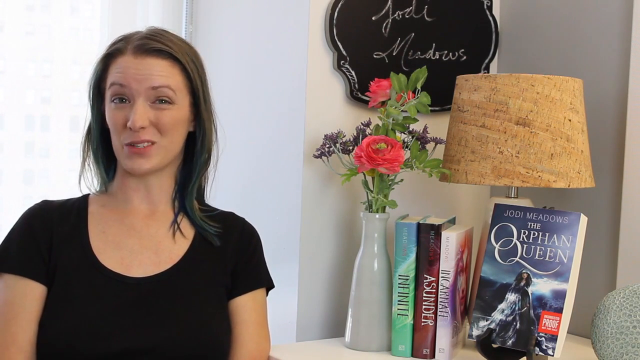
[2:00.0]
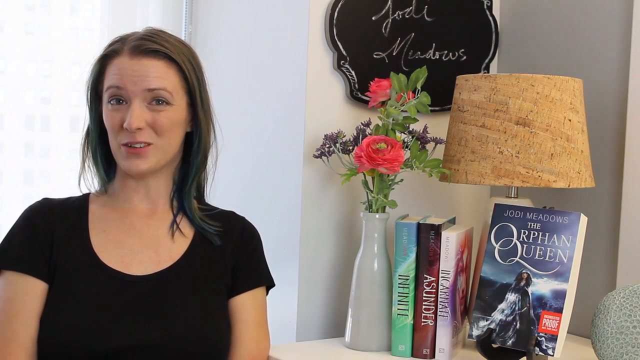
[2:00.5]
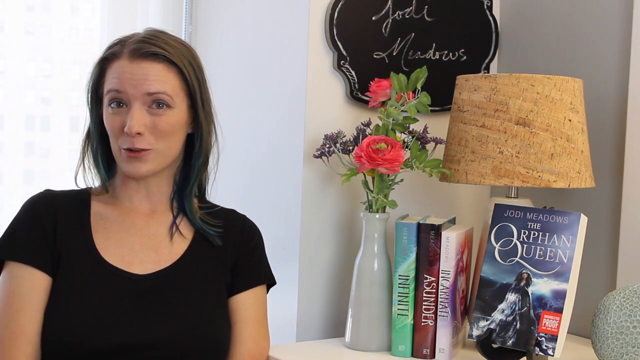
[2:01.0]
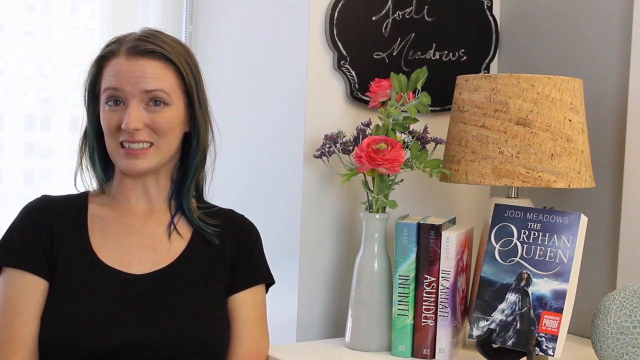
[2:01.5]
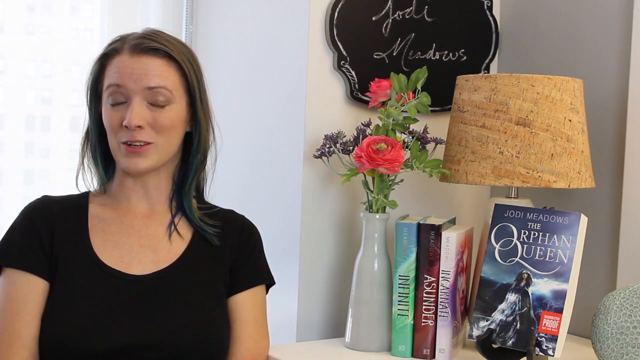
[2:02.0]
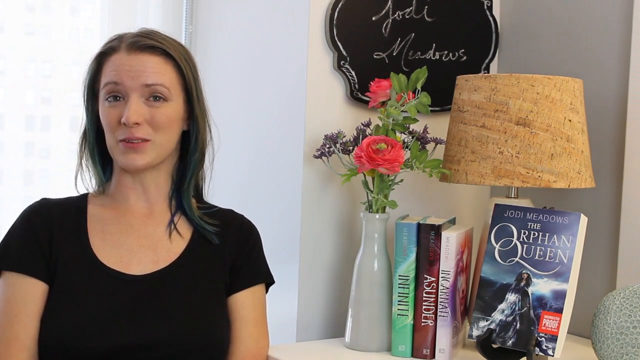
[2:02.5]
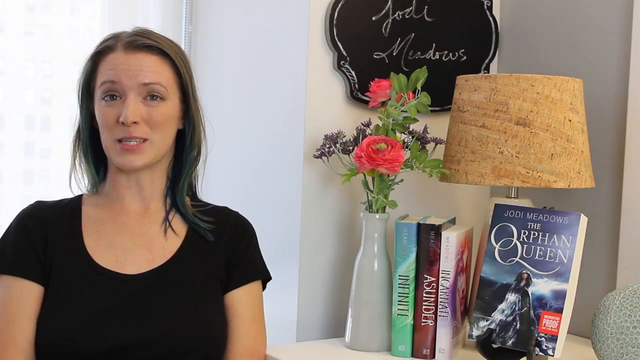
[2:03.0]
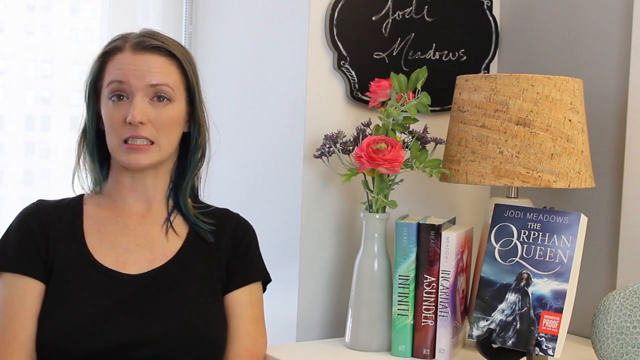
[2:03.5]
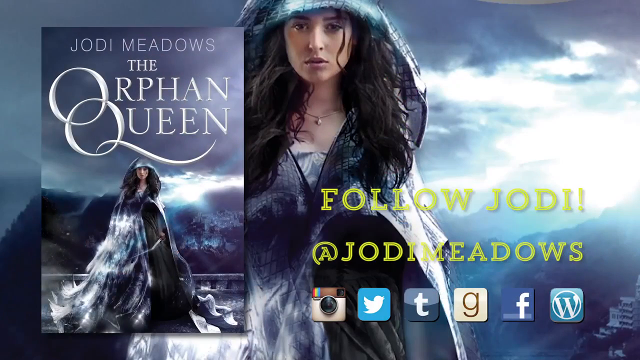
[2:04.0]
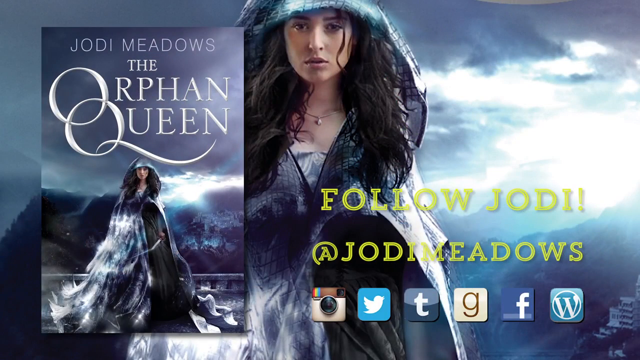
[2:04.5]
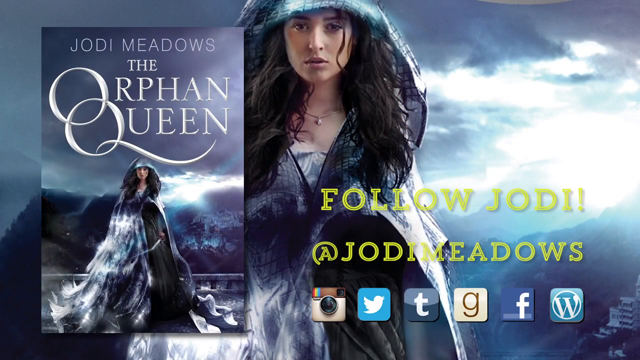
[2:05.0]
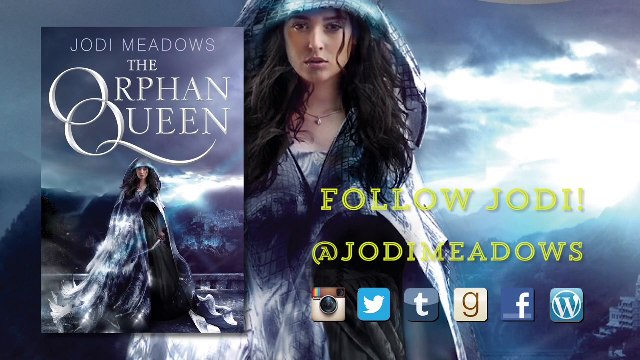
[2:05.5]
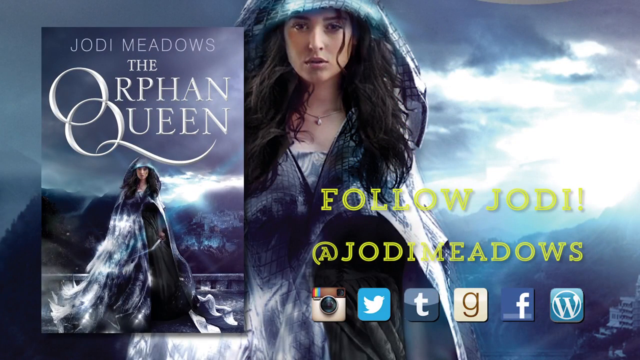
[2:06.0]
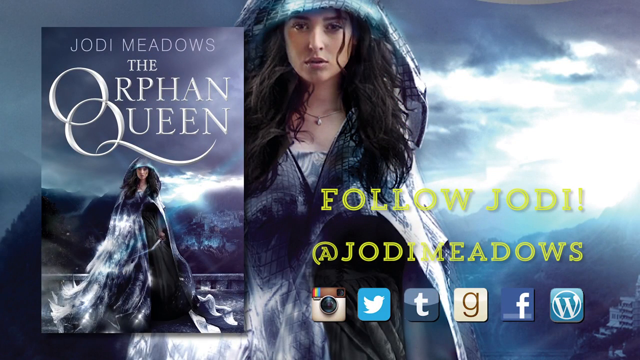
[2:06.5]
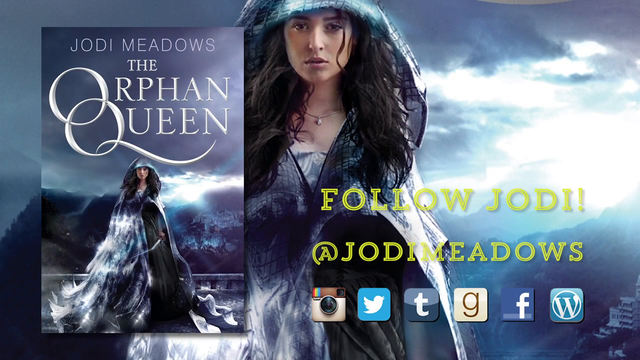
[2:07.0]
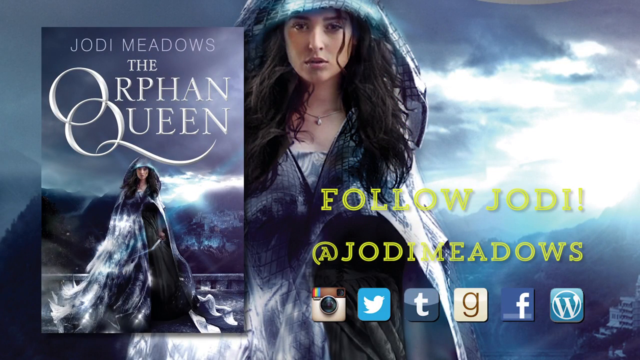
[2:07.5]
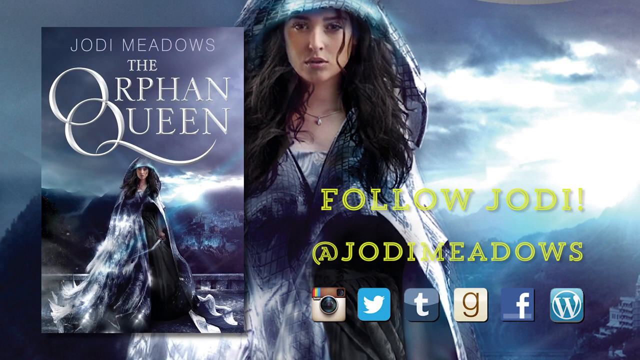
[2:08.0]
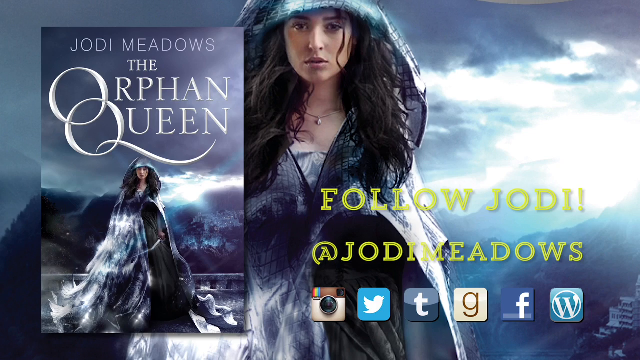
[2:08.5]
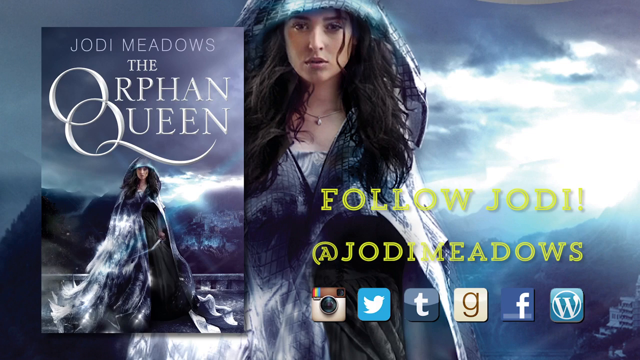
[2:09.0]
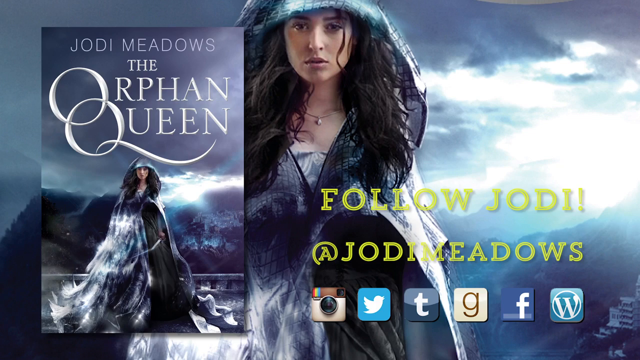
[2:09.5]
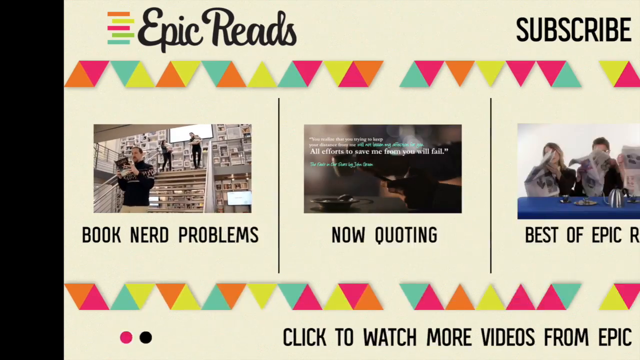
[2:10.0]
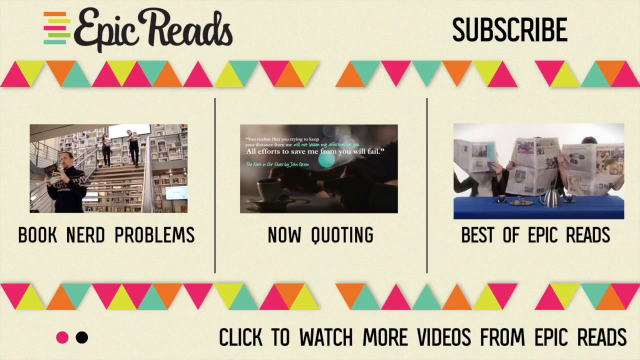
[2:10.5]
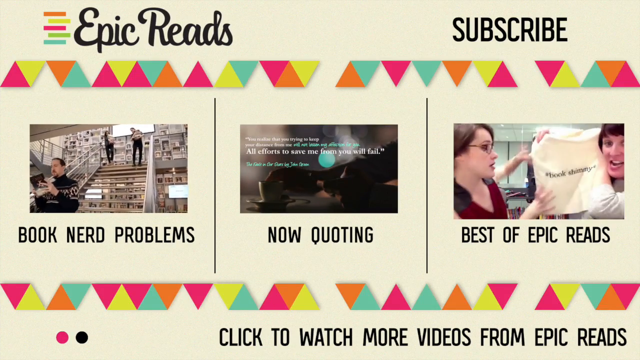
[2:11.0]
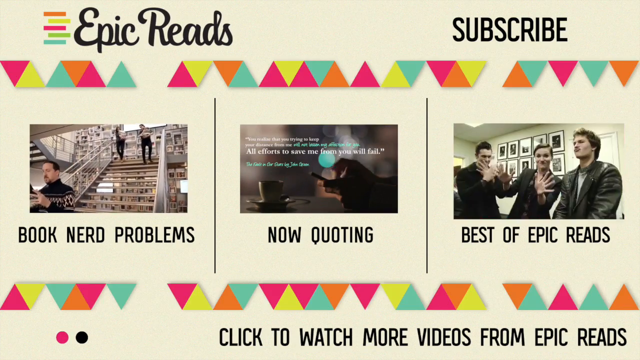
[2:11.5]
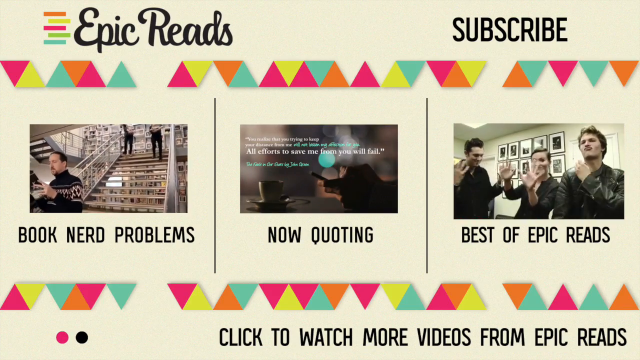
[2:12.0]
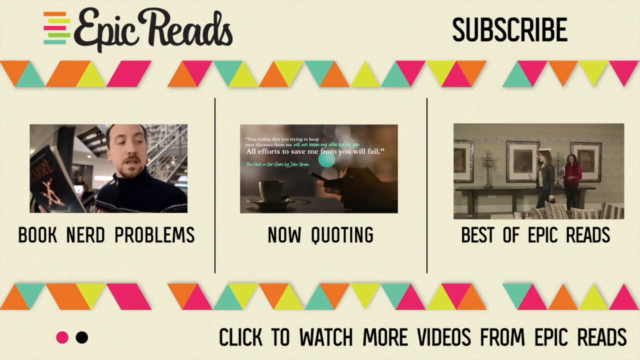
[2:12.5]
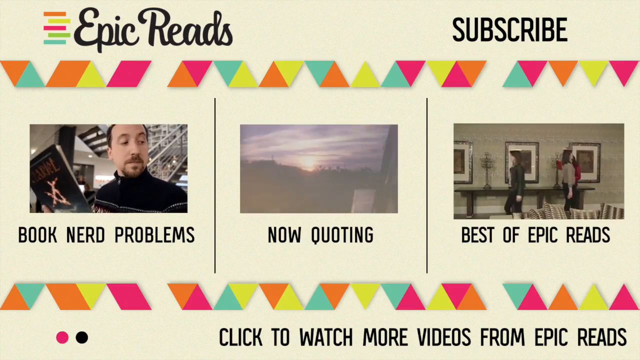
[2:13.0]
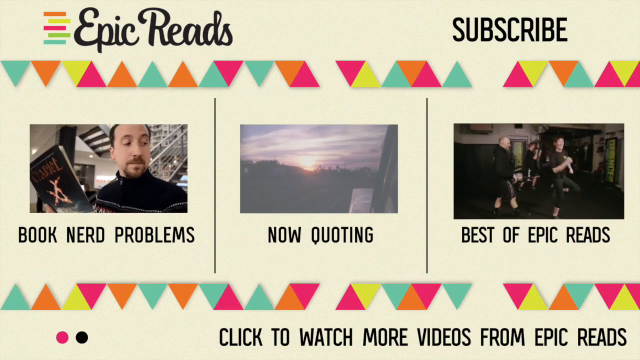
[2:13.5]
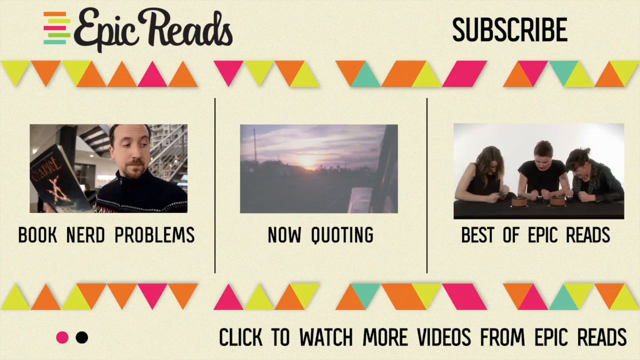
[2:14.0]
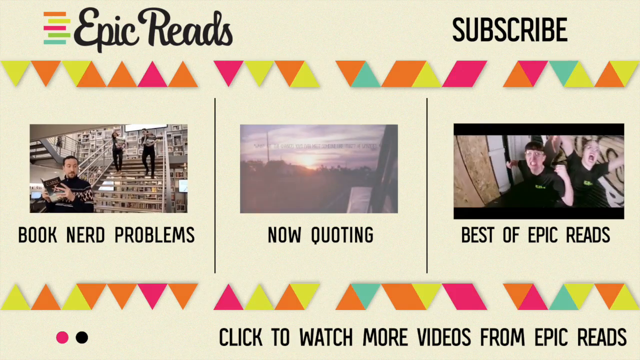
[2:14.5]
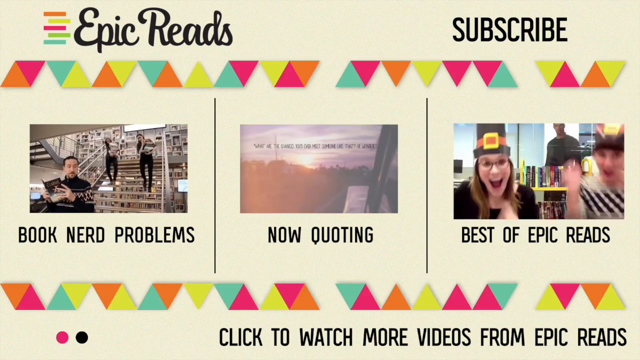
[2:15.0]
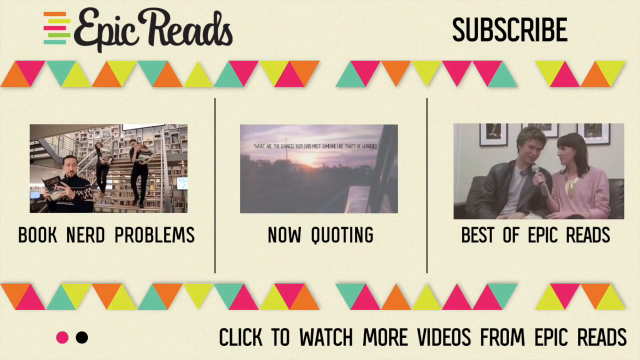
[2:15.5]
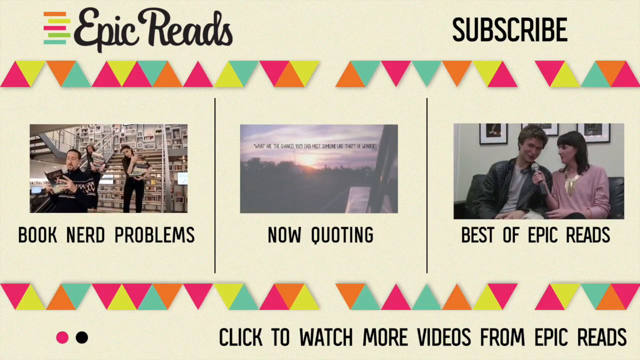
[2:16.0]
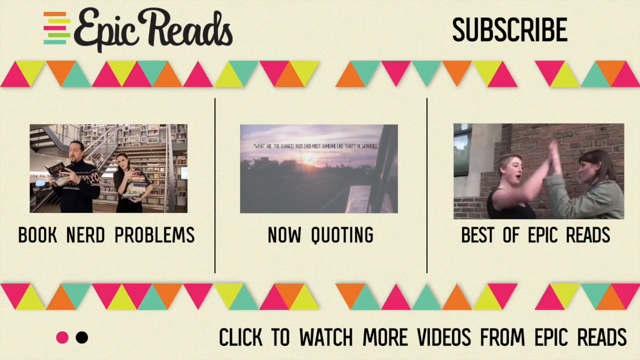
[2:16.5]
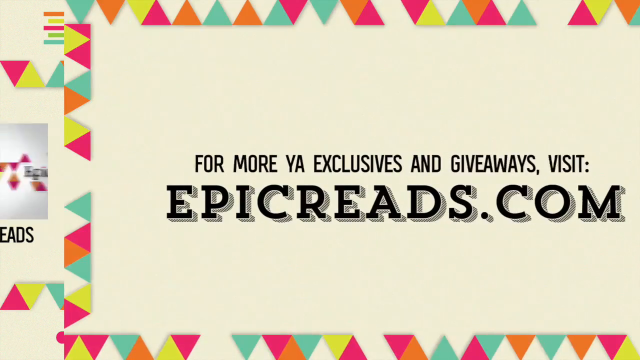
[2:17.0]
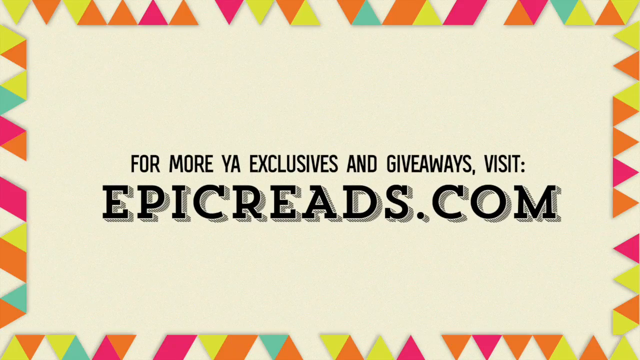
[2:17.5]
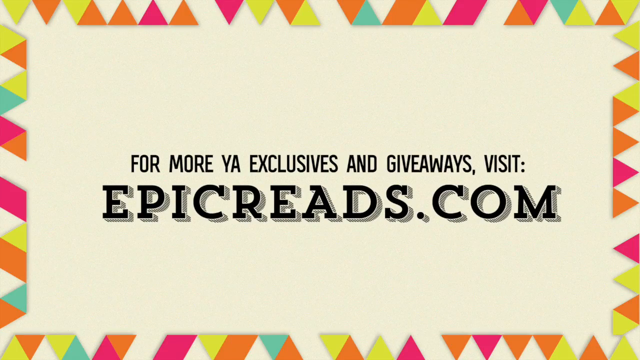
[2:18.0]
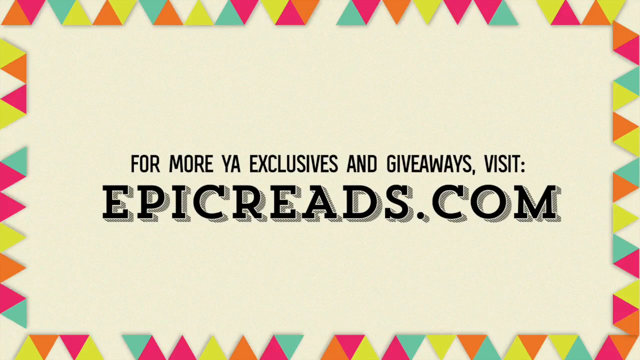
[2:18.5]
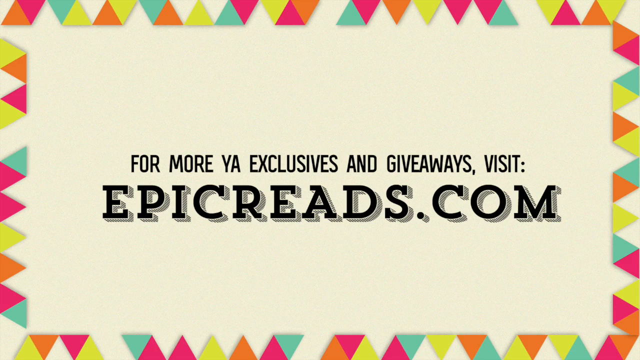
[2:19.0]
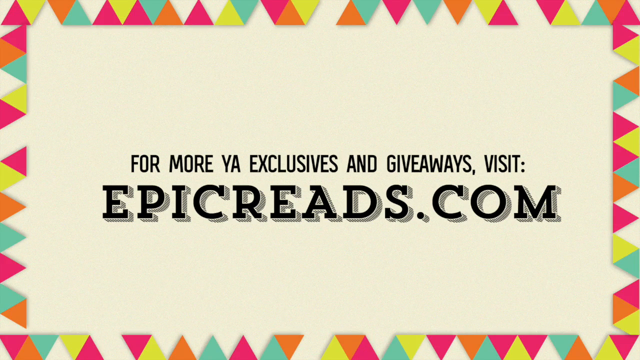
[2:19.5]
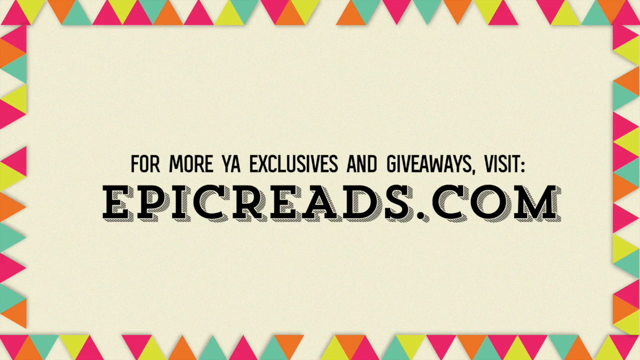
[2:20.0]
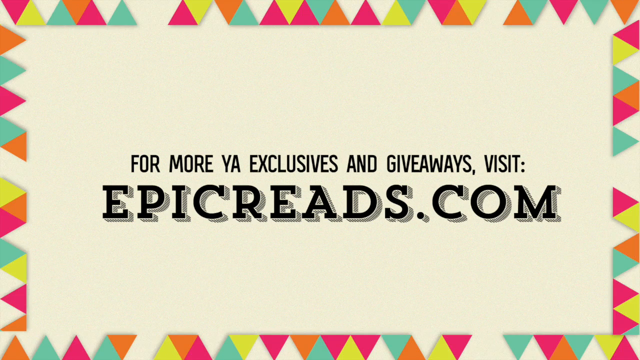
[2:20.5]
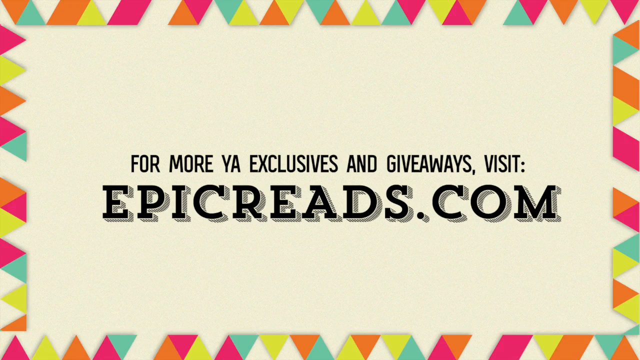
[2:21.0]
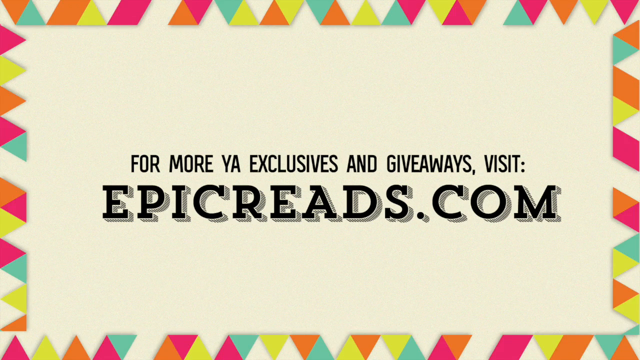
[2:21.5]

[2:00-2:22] A woman sits next to a bookshelf, wearing a black short-sleeved shirt, with long brown hair and brown eyes. The bookshelf holds several books, a small lamp and a vase with pink flowers. Above it, a small blackboard hangs on the wall with the name "Jodi Meadows" written in white chalk. One book is turned so its cover faces the camera: The Orphan Queen by Jodi Meadows. The video cuts to a promotional image for The Orphan Queen: a woman in a blue hood with long brown hair stands in the center against a sky with the sun peeking through the clouds over mountaintops. Yellow text reads "Follow Jodi at Jodi Meadows" and several social media sites are shown, such as Twitter, Tumblr, Google, Facebook and WordPress. The book itself appears on the left side; its cover features the same woman as the large central image, and it is The Orphan Queen by Jodi Meadows. The video then cuts to an end card with the Epic Reads logo at the top left and the word "Subscribe" at the top right. Three video thumbnails appear, labeled "Book Nerd Problems", "Now Quoting" and "Best of Epic Reads". A note at the bottom says viewers can click to watch more videos by Epic Reads. Another message on screen says that for more YA exclusives and giveaways, visit epicreads.com.